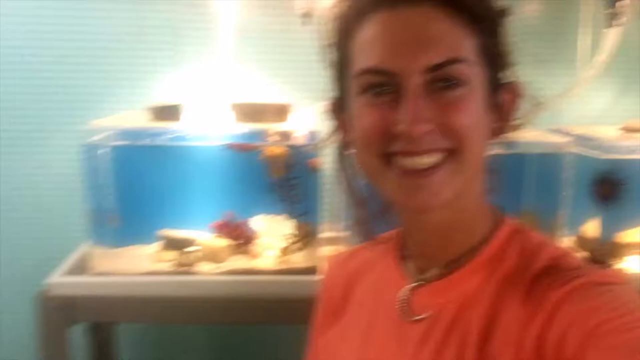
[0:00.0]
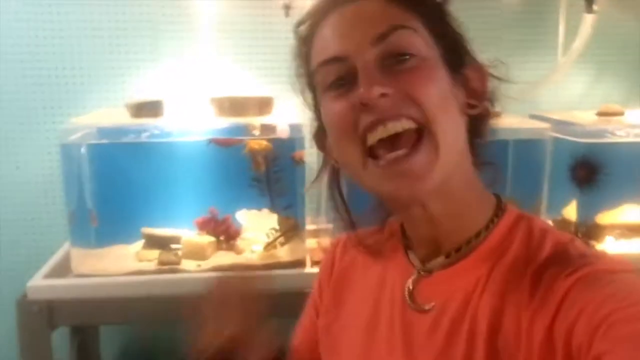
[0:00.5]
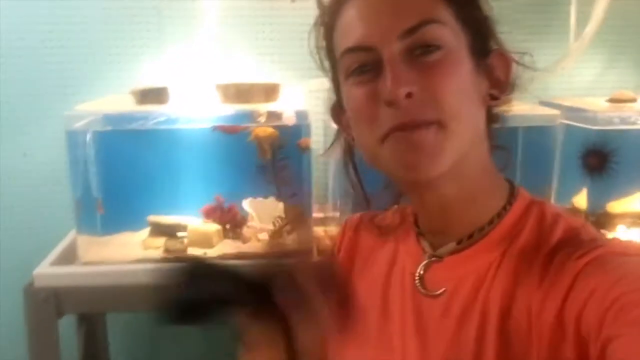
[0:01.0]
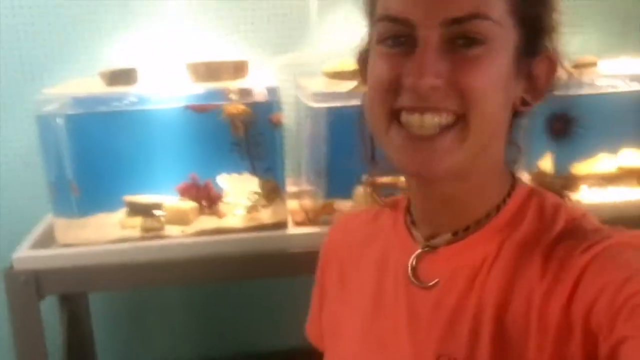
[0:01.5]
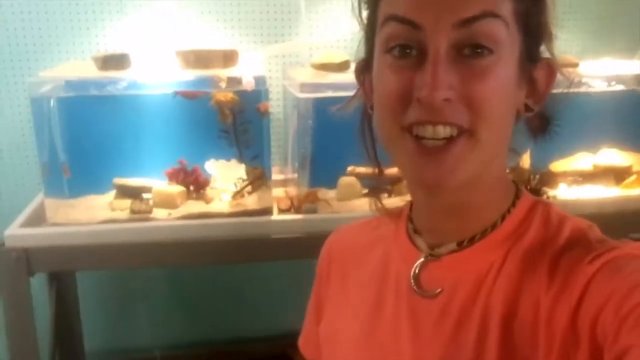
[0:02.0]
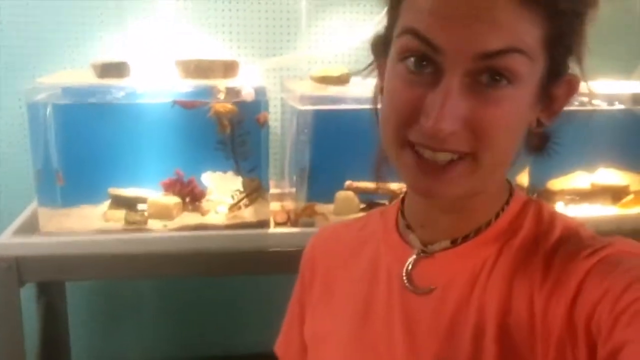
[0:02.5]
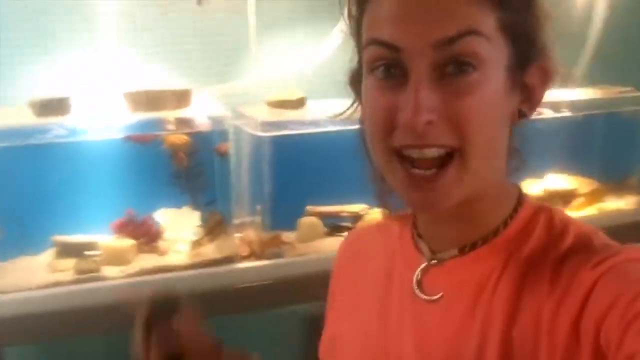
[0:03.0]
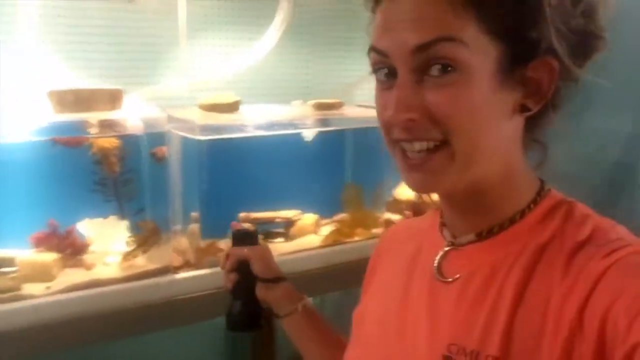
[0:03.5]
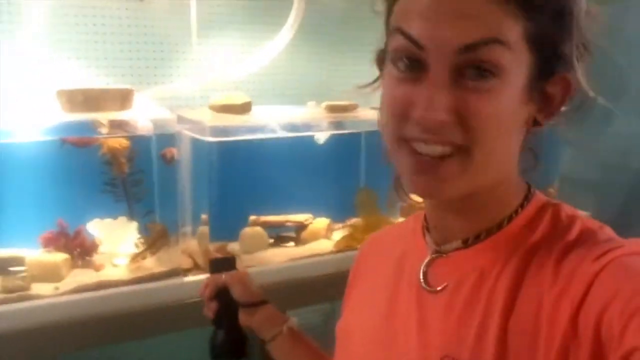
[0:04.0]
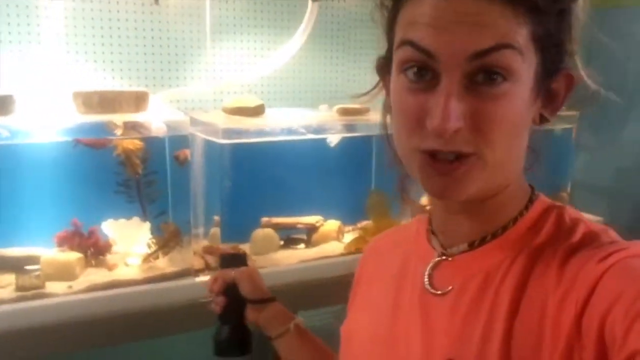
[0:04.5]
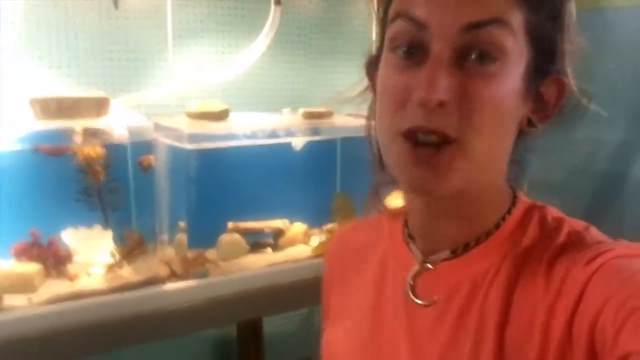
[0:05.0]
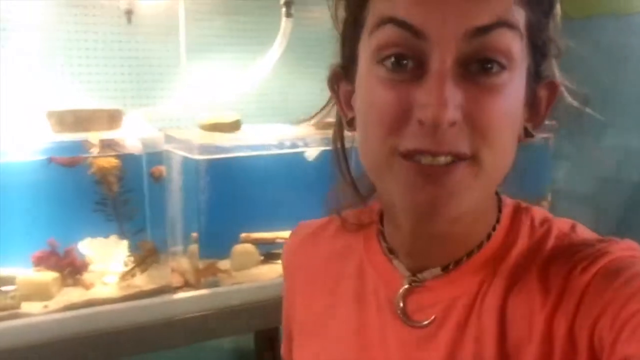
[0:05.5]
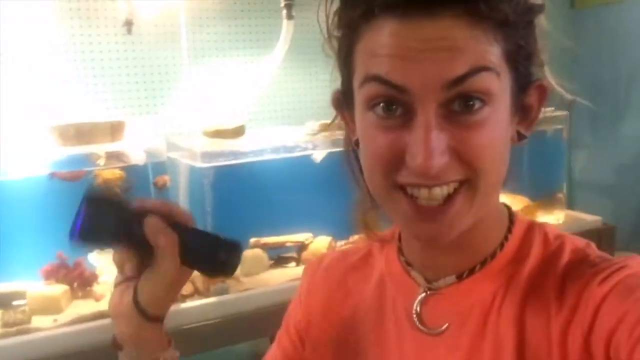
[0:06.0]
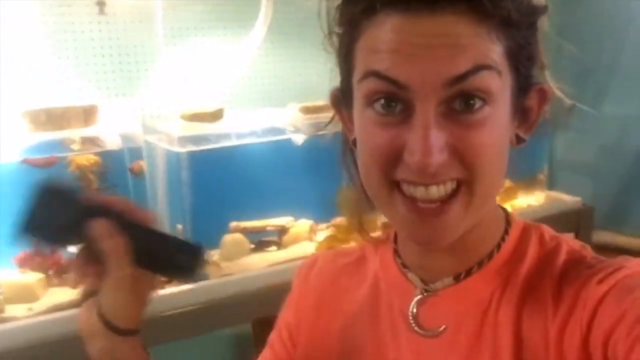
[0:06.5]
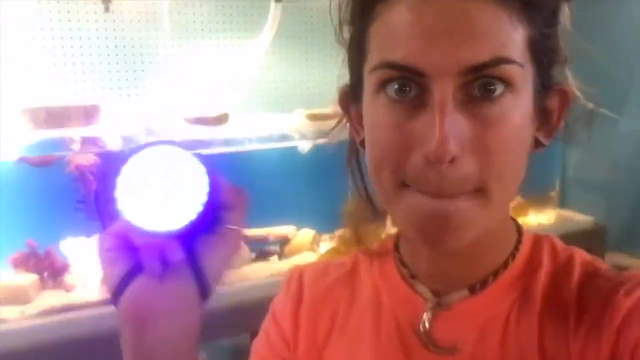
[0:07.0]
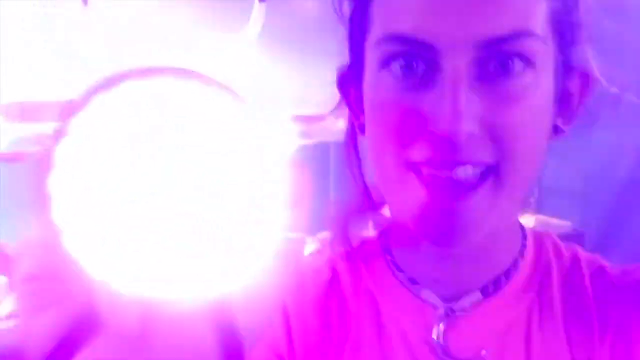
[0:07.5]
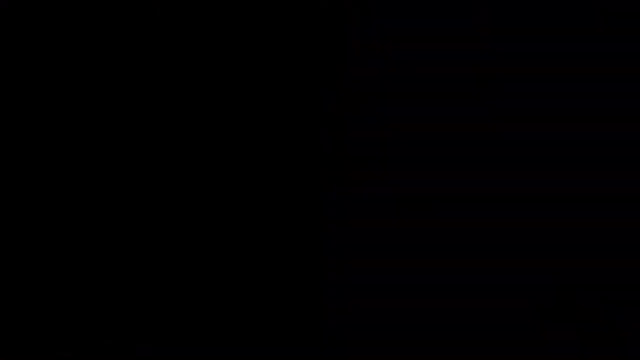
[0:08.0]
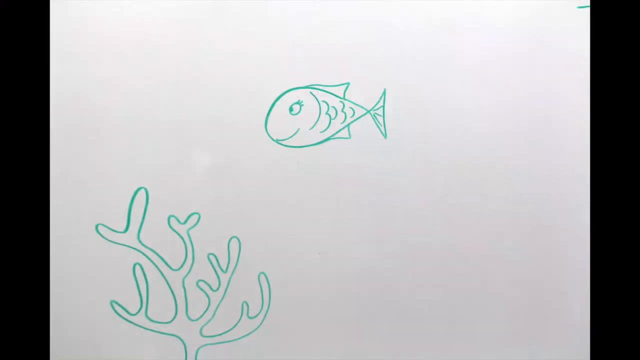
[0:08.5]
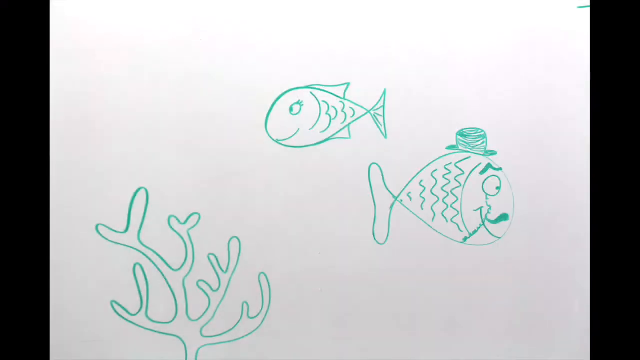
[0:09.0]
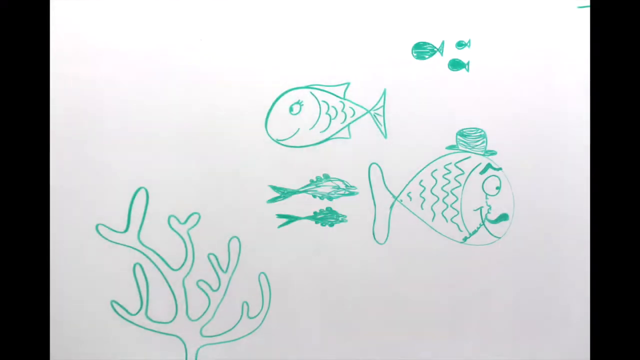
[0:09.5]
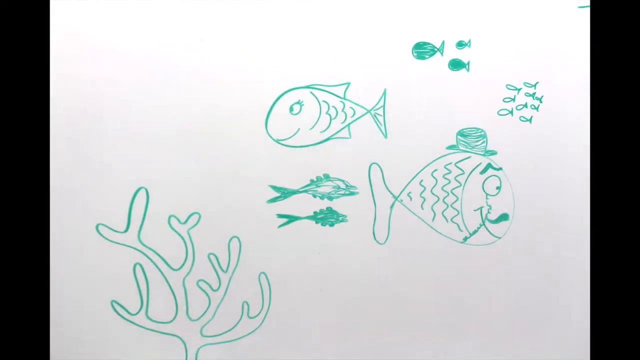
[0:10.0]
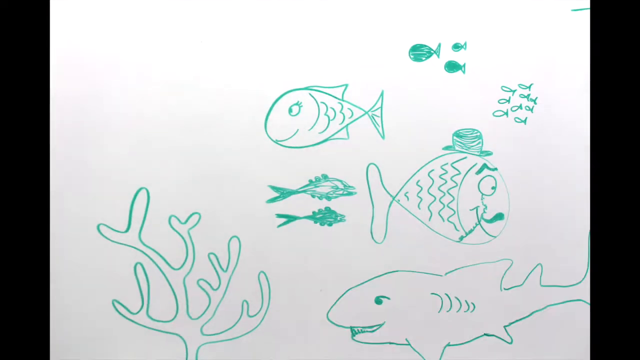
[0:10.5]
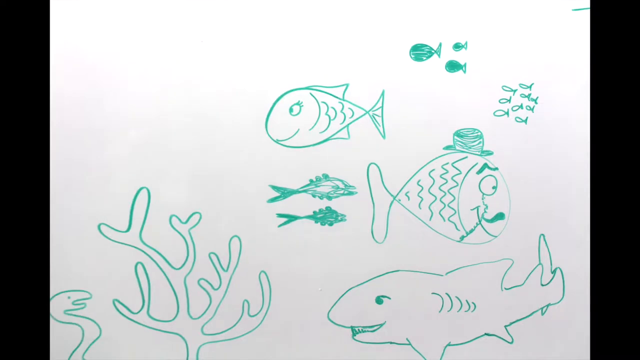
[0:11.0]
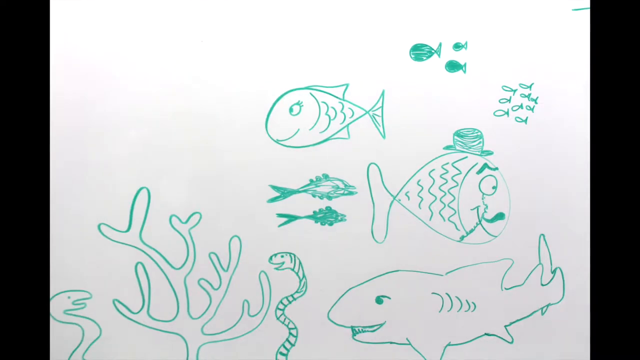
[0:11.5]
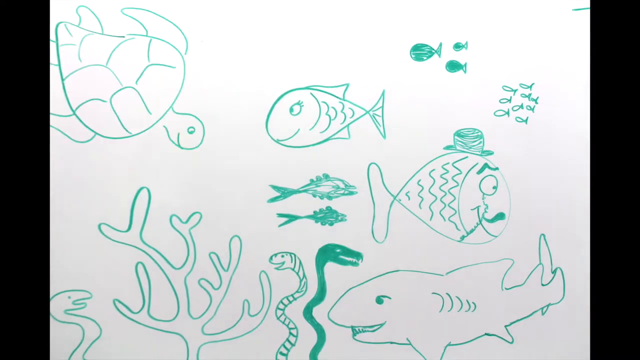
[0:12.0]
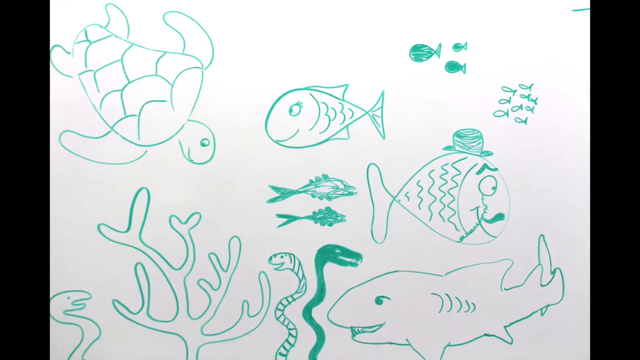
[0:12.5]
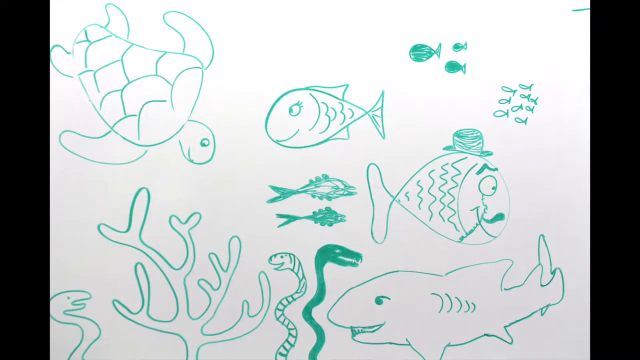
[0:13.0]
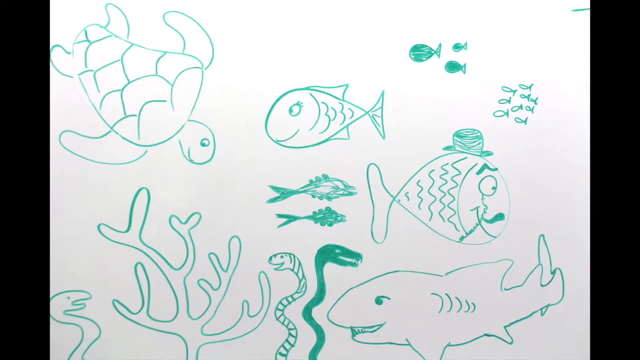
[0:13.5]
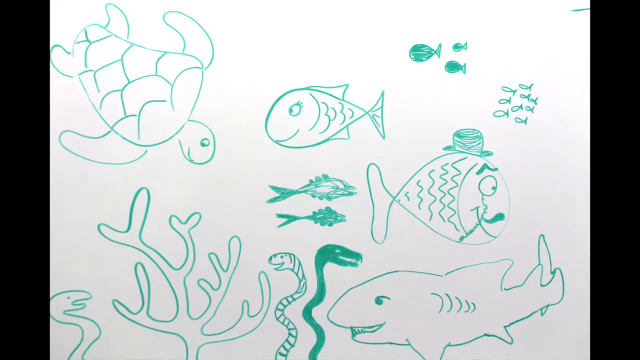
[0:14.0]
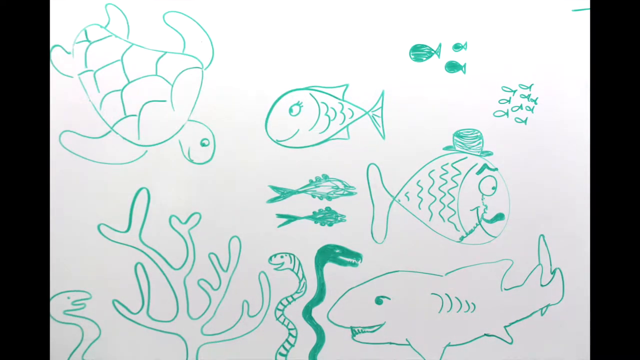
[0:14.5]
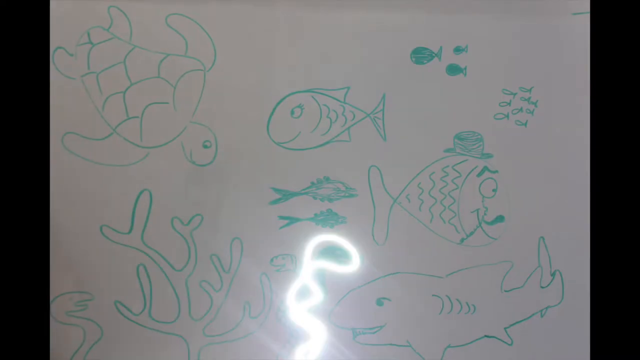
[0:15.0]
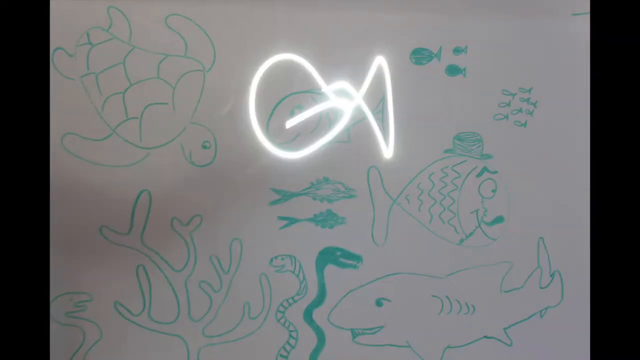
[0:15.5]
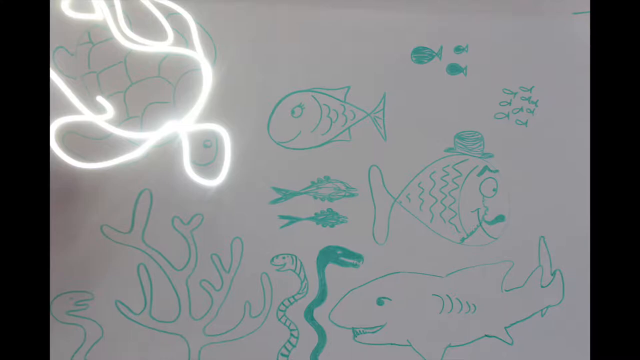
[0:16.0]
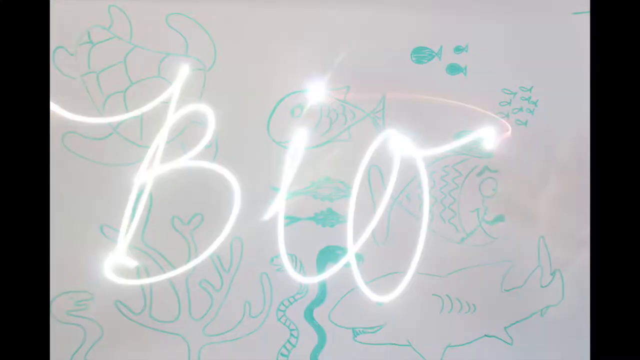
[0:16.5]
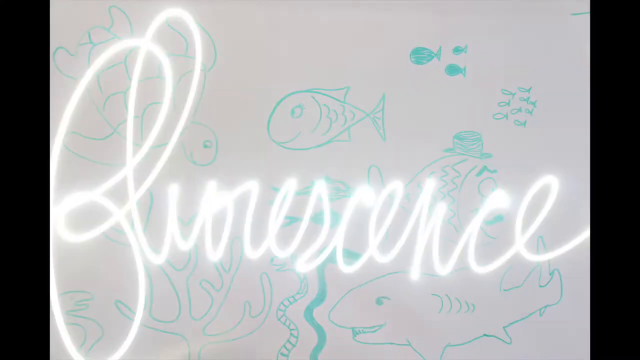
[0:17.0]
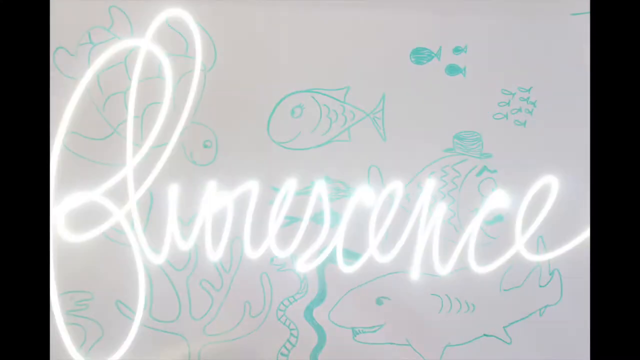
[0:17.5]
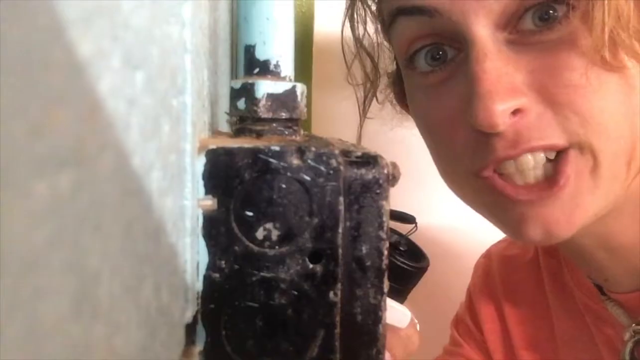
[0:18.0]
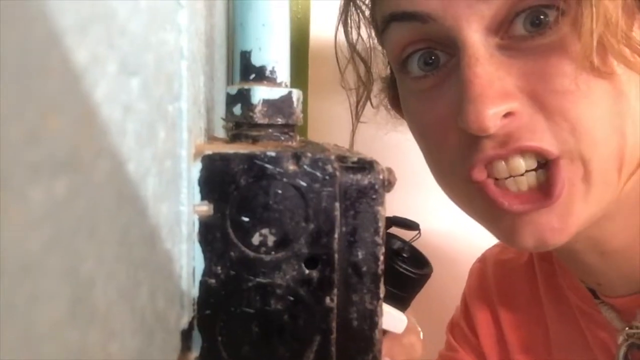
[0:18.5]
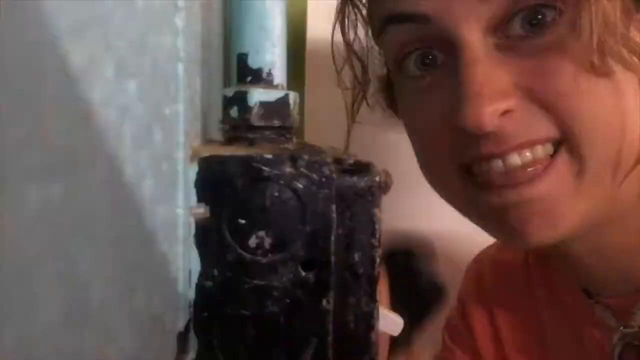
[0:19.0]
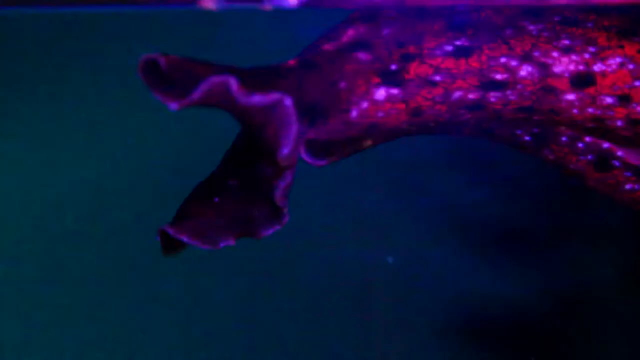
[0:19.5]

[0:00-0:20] A lady records herself with the front camera, smiling, waving into the camera and talking happily. She holds a torch and lights it toward the camera. The setting changes to drawings of a fish, a turtle and other sea creatures on a white board, with a purple pen there. The video then returns to the lady talking through the camera, addressing or explaining something as she records herself, and she also records something on the wall as she talks. She picks up the torch, and the camera focuses on finer details that illustrate aquatic animals, apparently animals from inside the ocean.